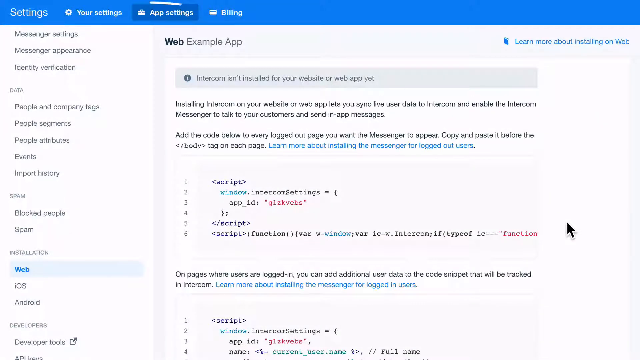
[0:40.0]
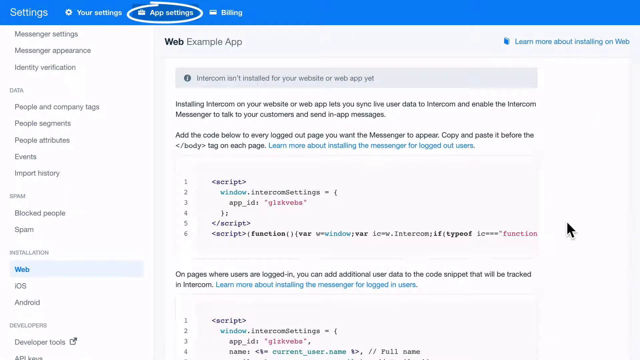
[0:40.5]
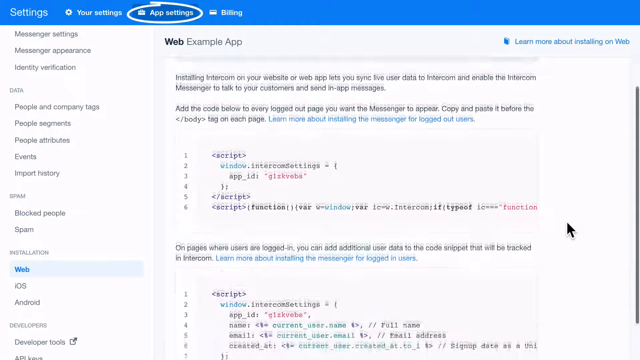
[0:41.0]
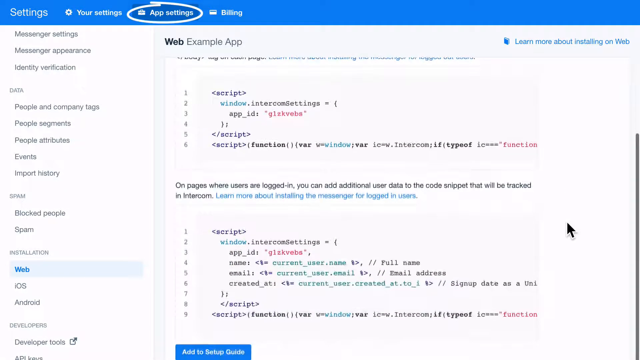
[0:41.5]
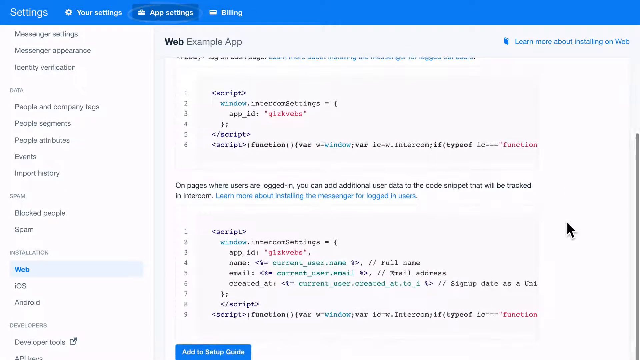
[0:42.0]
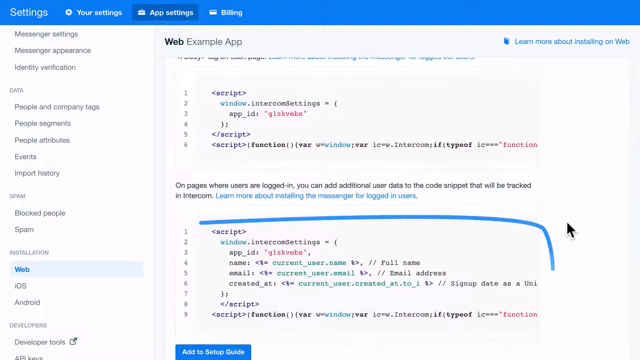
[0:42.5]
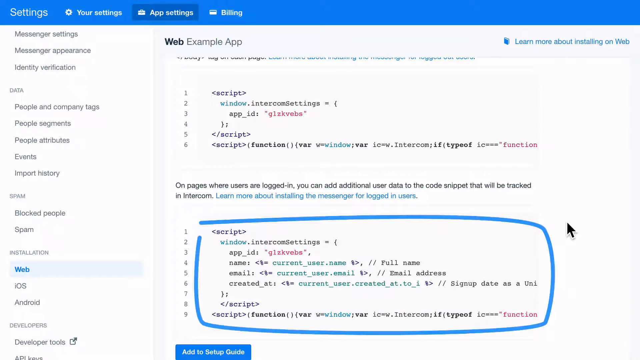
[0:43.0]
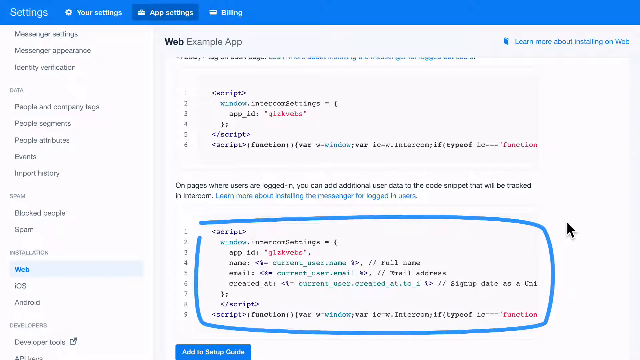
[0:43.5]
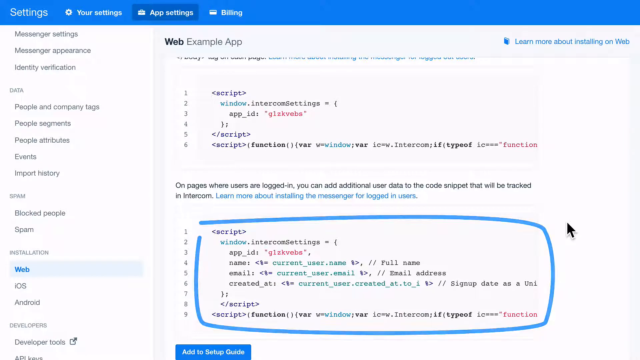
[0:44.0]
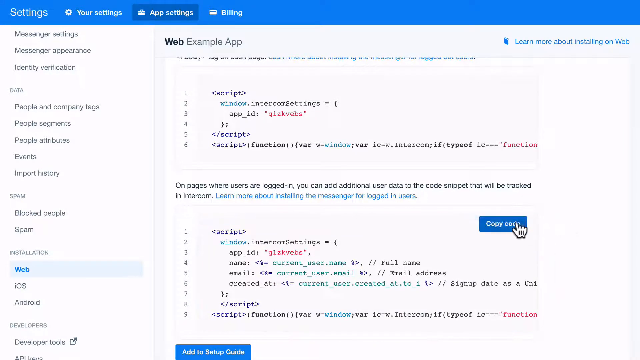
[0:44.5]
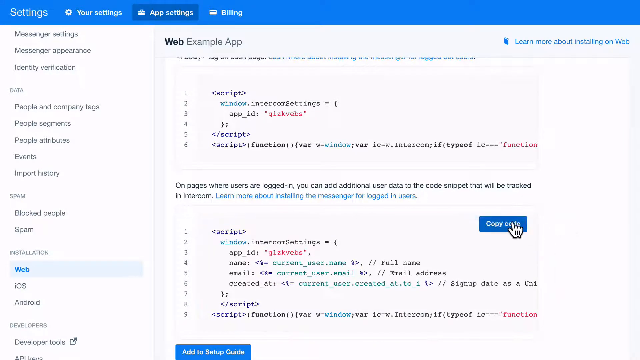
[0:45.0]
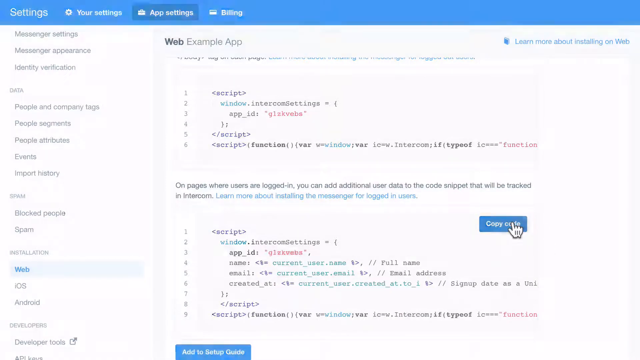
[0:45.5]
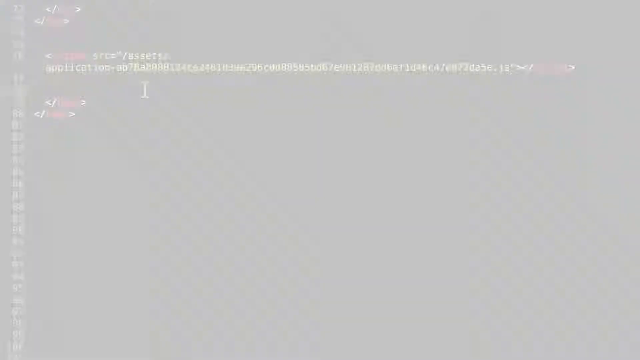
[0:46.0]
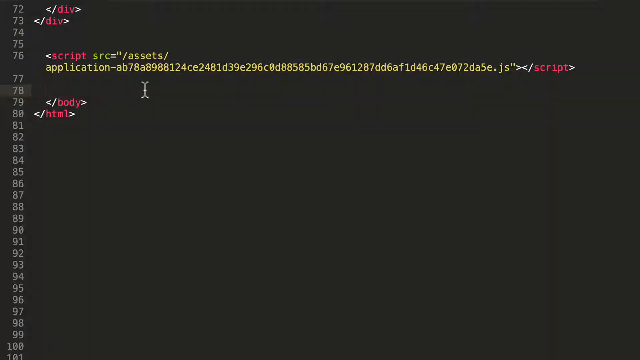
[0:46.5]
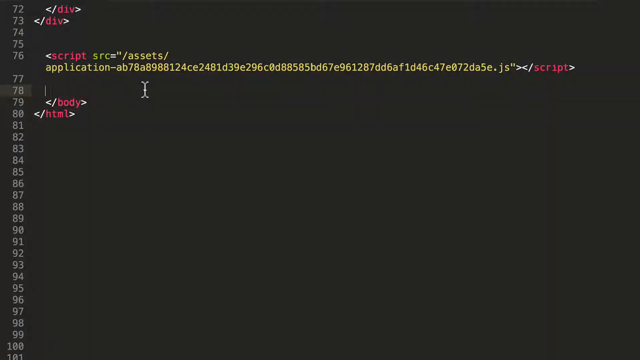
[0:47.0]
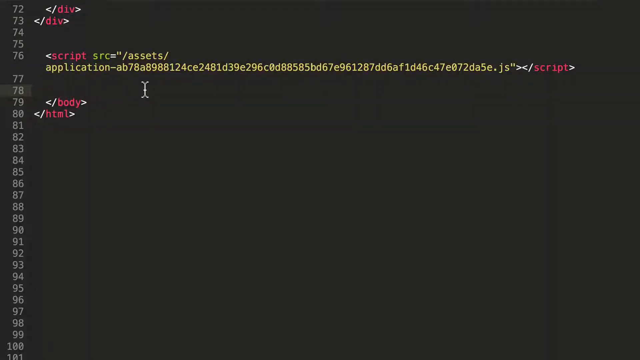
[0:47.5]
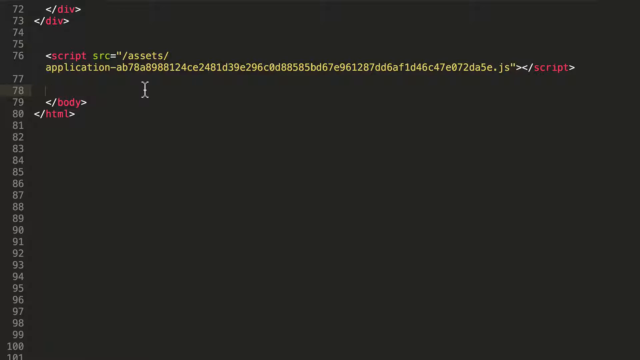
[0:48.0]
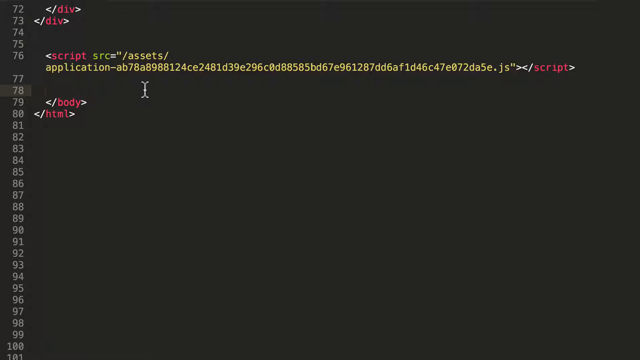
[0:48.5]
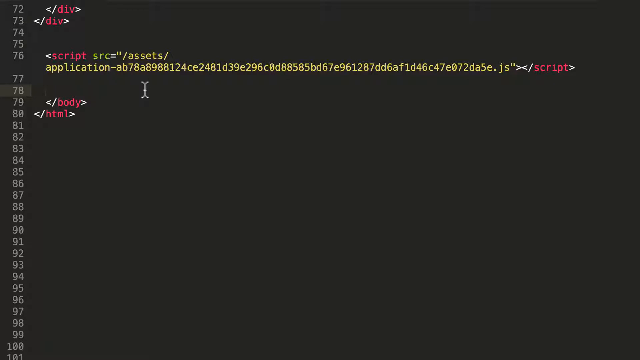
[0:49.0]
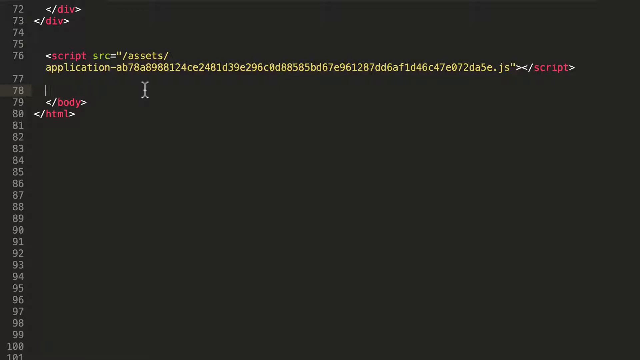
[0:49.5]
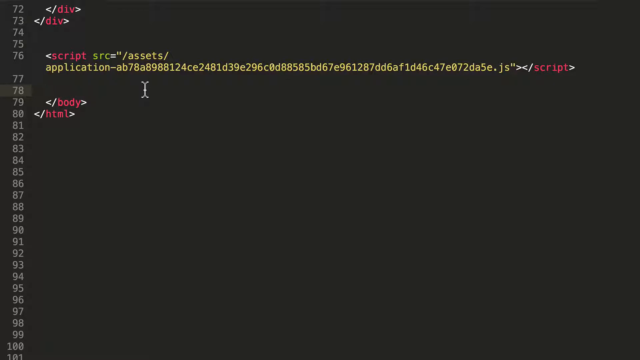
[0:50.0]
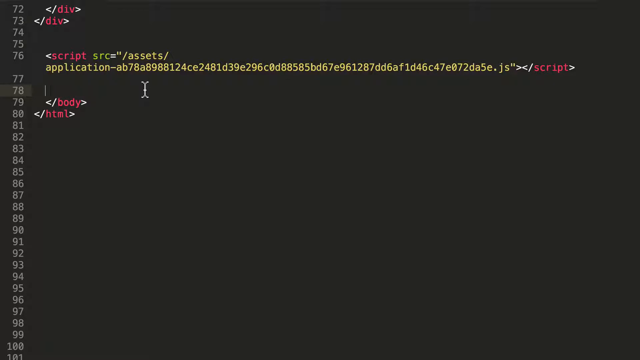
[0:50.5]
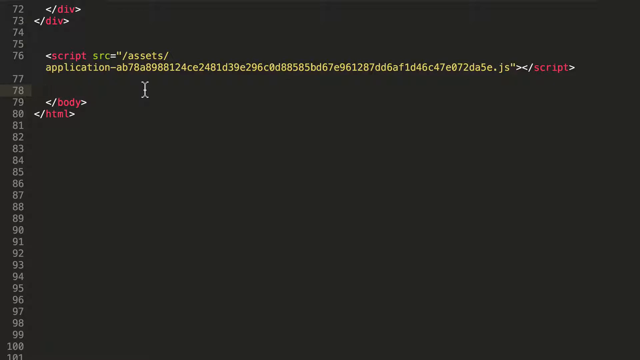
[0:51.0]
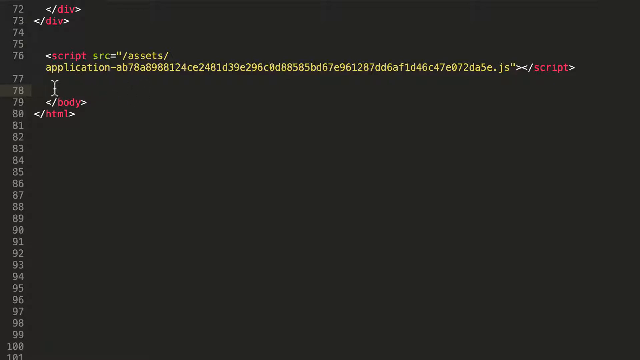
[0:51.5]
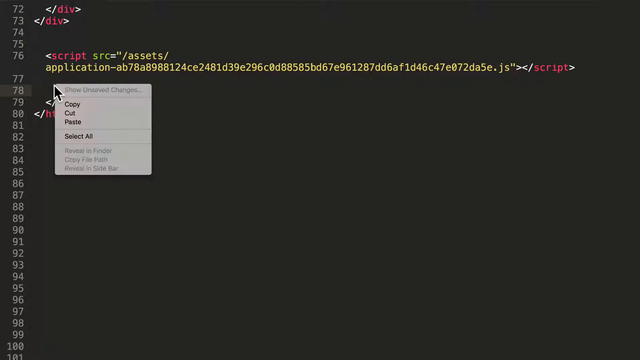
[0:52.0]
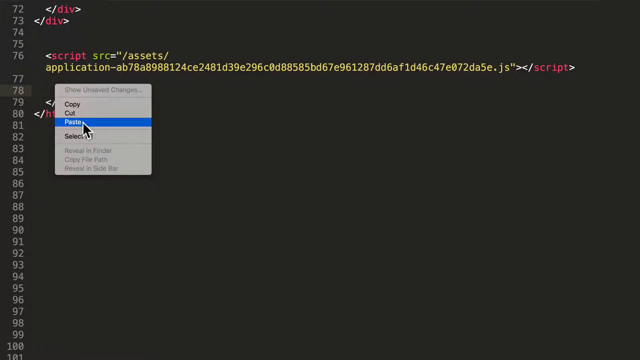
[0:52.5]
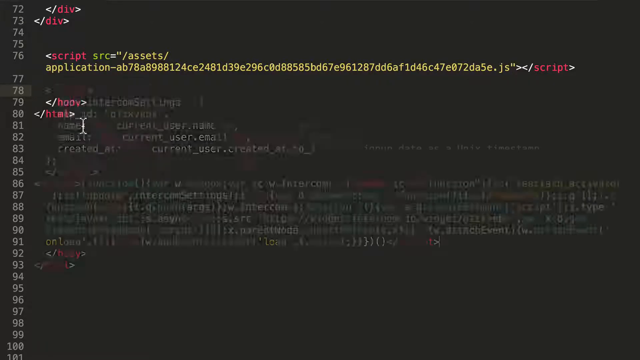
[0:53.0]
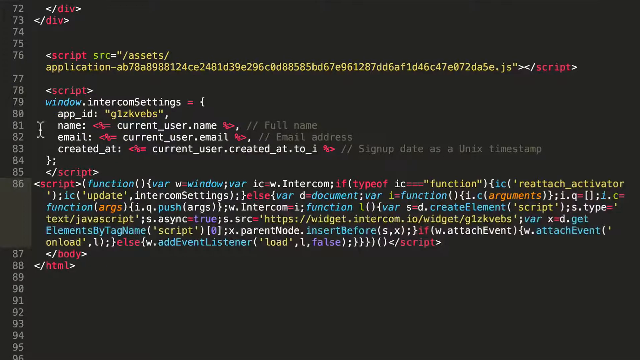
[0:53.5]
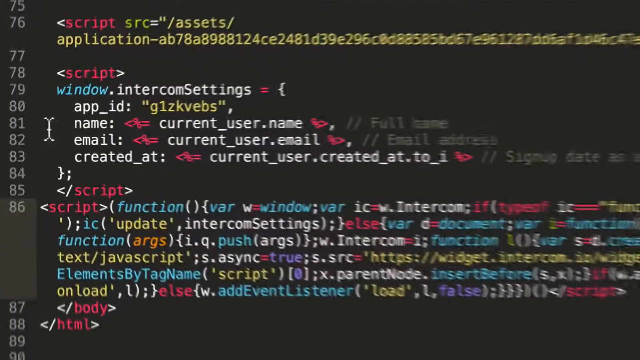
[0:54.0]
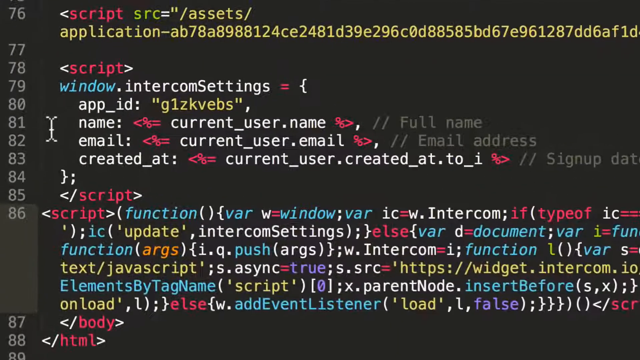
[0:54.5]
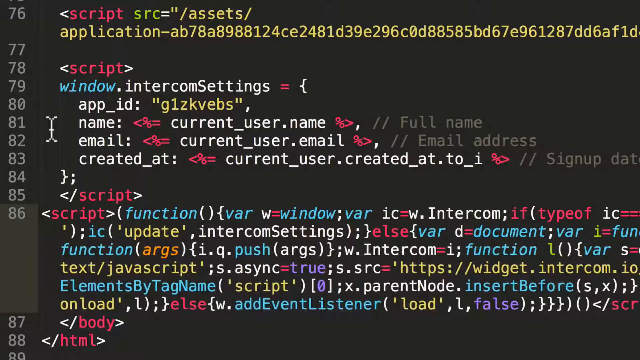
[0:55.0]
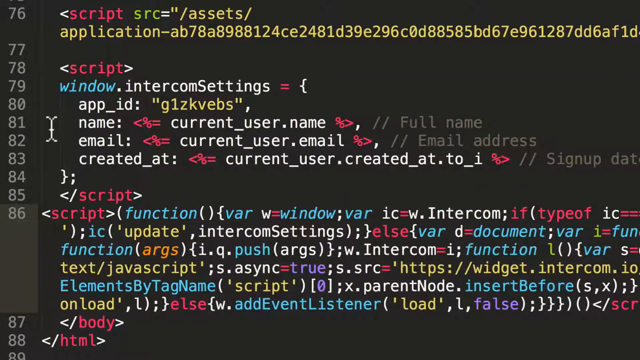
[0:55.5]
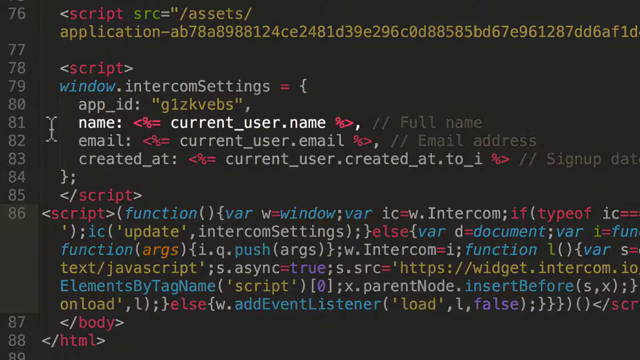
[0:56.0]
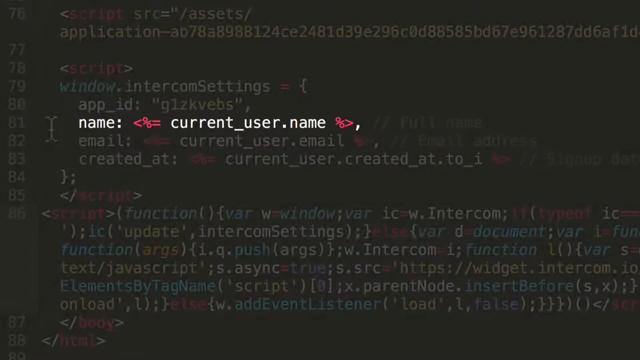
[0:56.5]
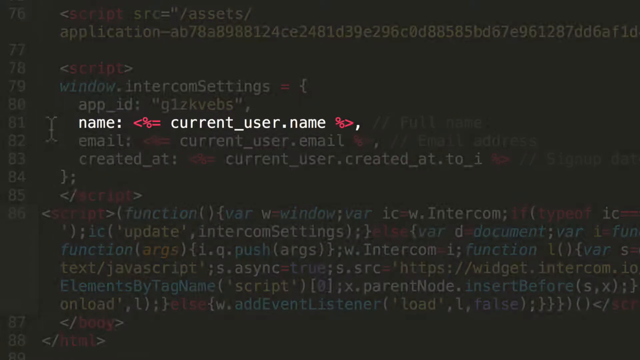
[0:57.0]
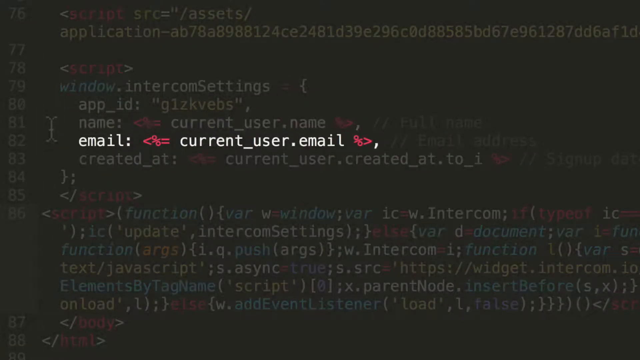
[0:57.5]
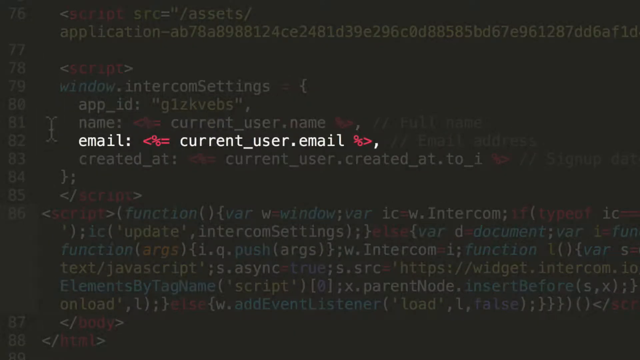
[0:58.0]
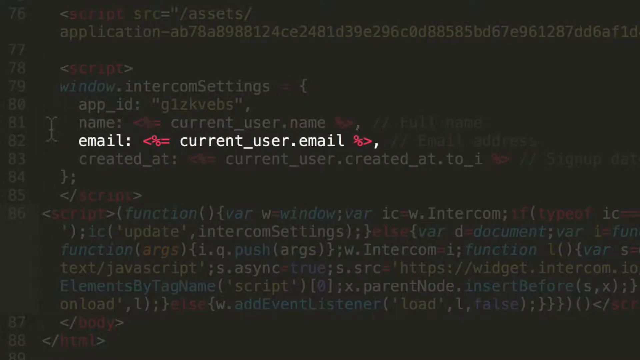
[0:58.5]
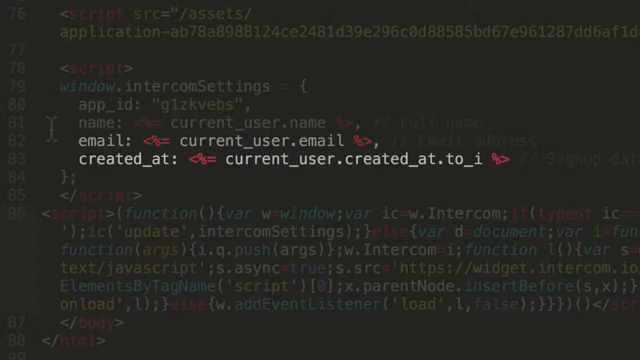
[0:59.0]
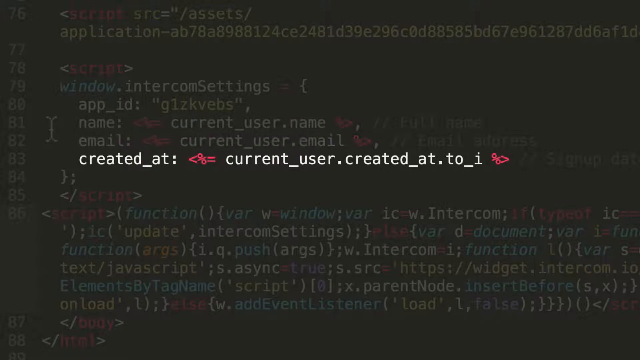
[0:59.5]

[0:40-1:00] A page shows multiple web login apps and data usage in multiple colors: purple, yellow, blue and red. A circle at the bottom, in the middle of the page and more to the right, says "script." The left-hand side of the page lists "messenger settings," "messenger appearance," "instant identity verification," "people and company tags," "people," "segments" and "events." At the top it says "web example app," and a blue taskbar at the very top says "settings," with "your settings" as the first click box, then "app settings" and "billing." The app settings are displayed, and down the left side the web portion is shown. A hand cursor moves to the left and clicks on the blue button. A black screen appears with multiple numbers down the sides; a button is clicked and multiple scripts come up in many different colors, some of which look like email scripts.